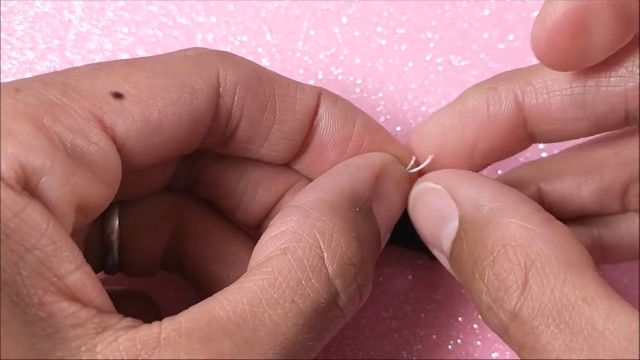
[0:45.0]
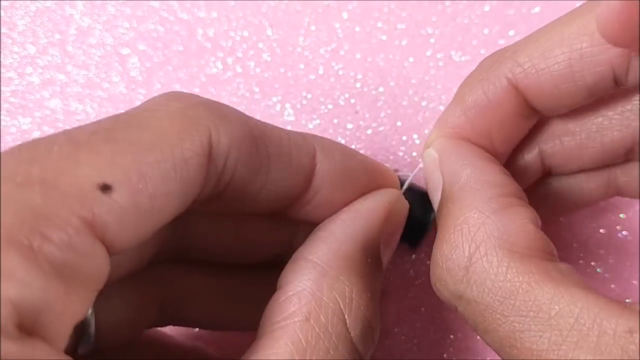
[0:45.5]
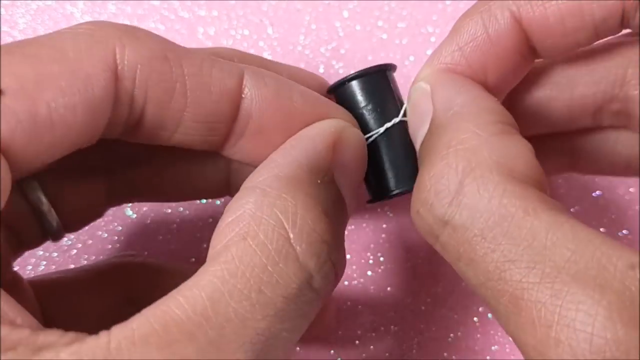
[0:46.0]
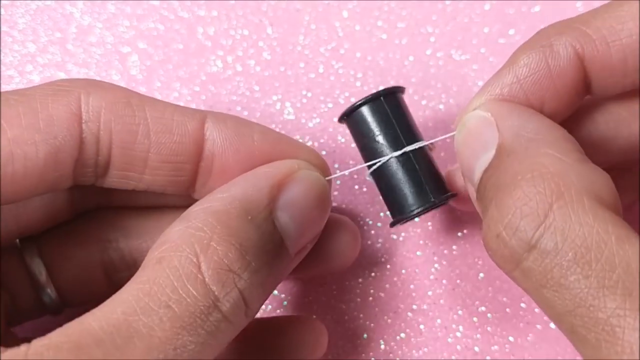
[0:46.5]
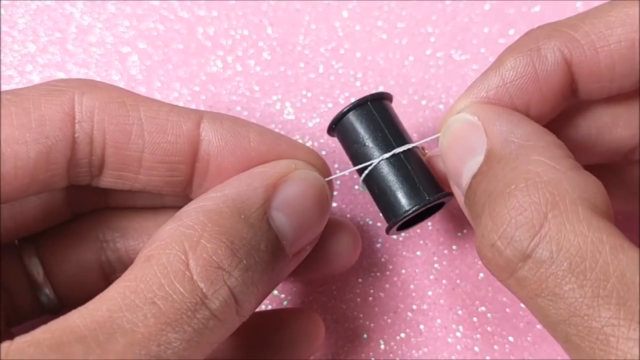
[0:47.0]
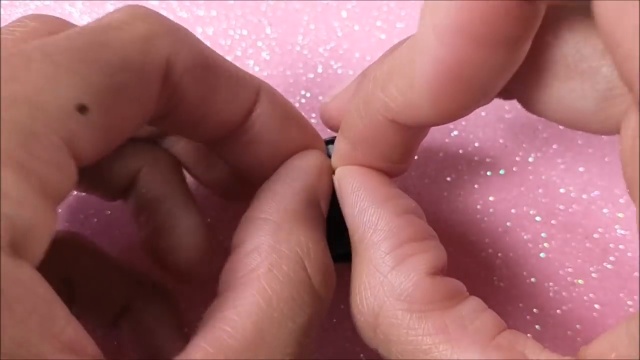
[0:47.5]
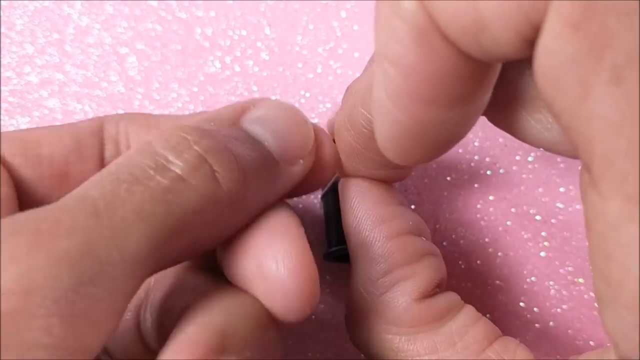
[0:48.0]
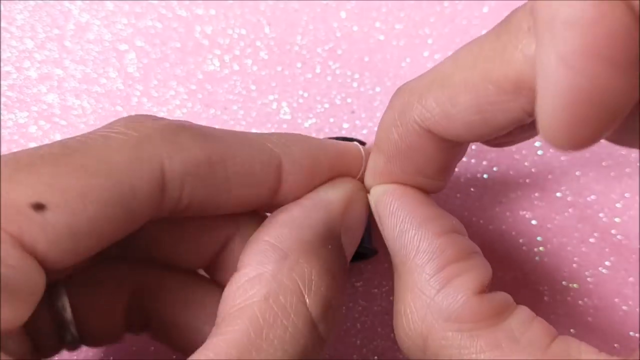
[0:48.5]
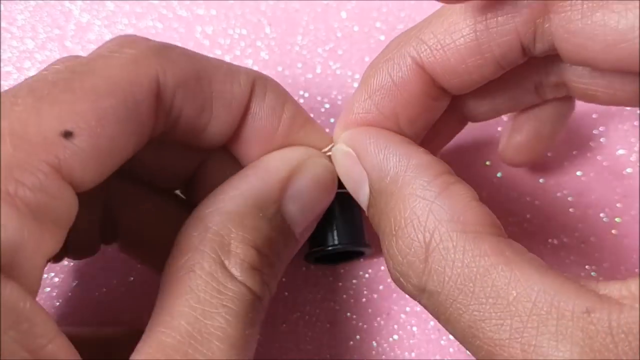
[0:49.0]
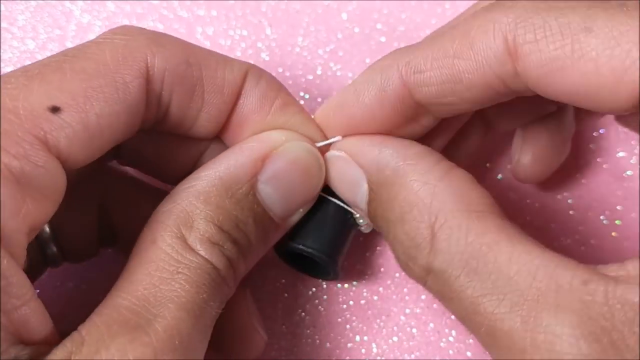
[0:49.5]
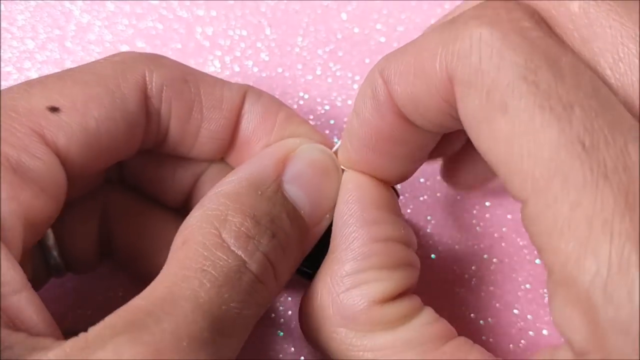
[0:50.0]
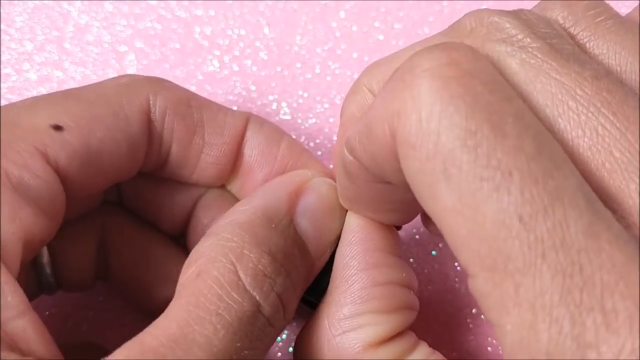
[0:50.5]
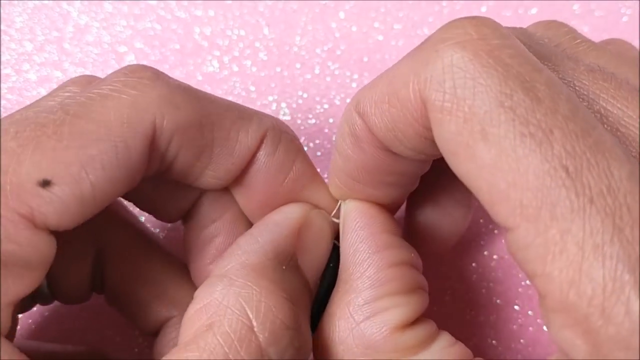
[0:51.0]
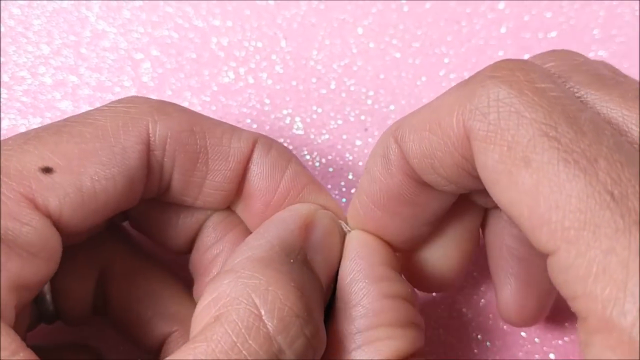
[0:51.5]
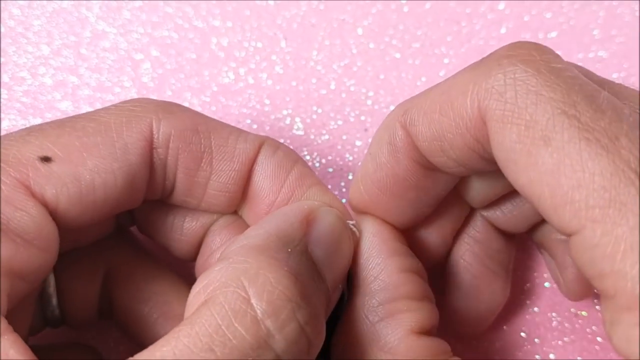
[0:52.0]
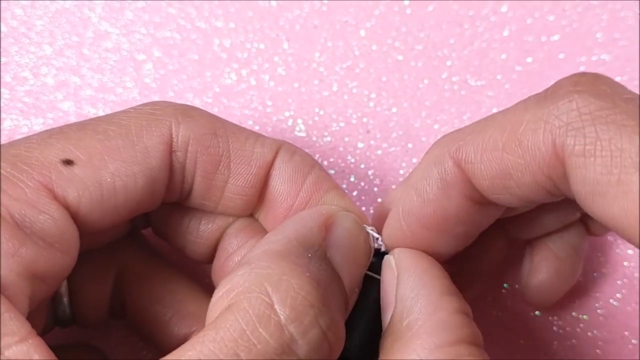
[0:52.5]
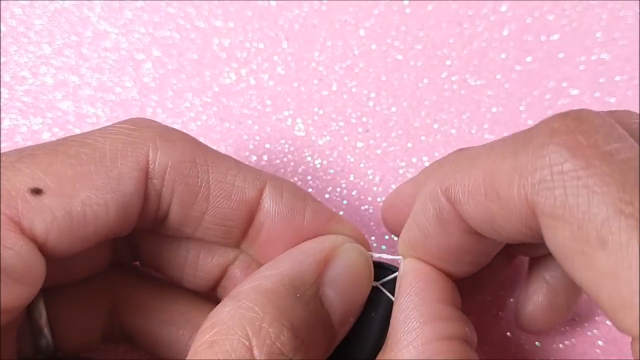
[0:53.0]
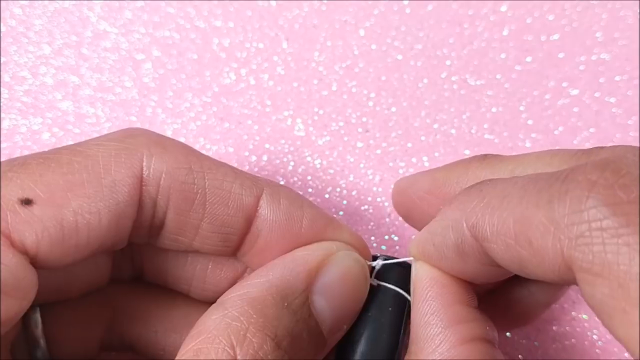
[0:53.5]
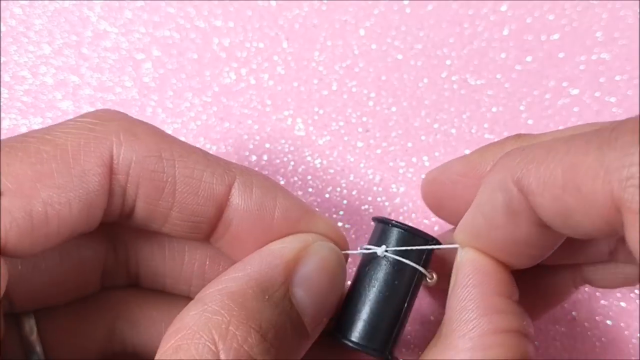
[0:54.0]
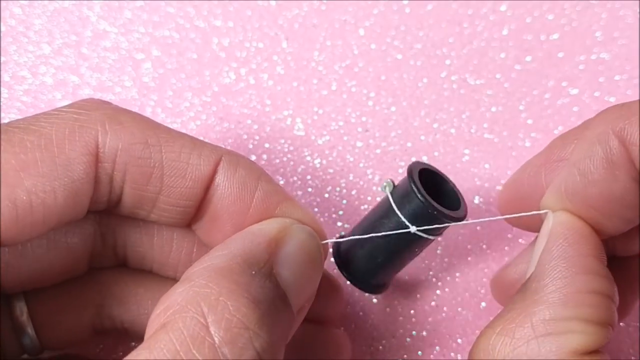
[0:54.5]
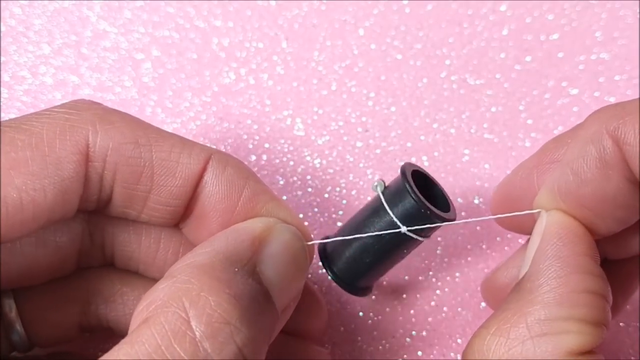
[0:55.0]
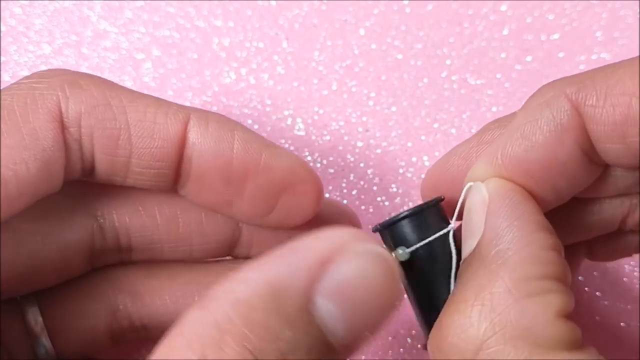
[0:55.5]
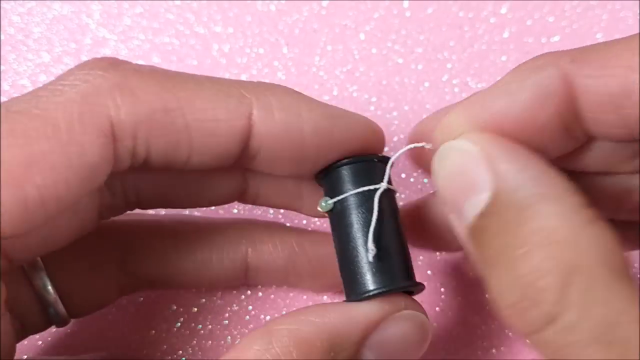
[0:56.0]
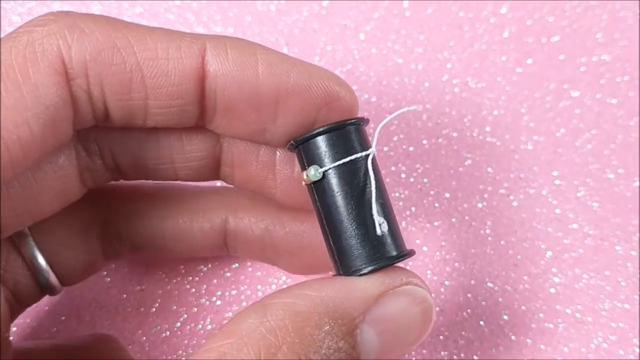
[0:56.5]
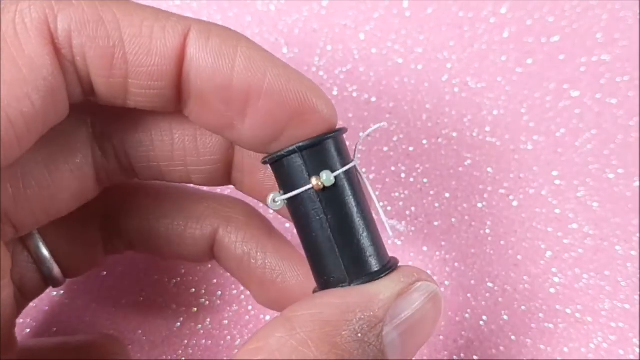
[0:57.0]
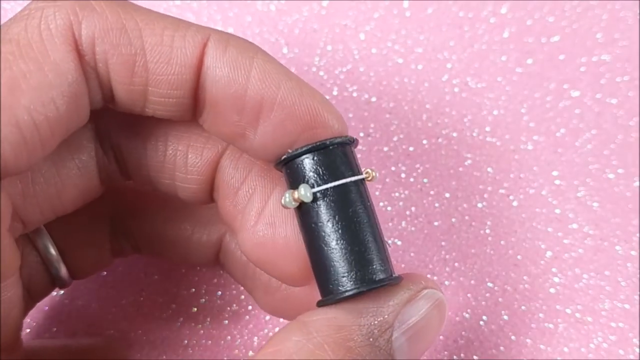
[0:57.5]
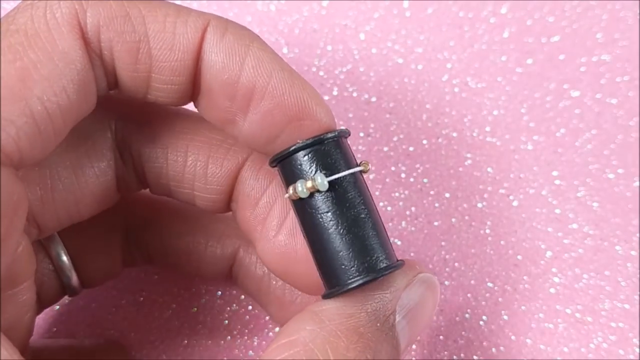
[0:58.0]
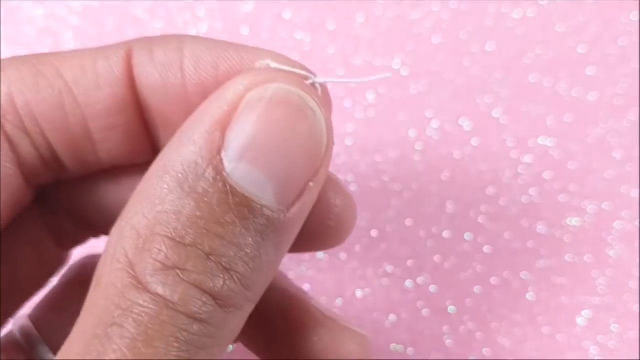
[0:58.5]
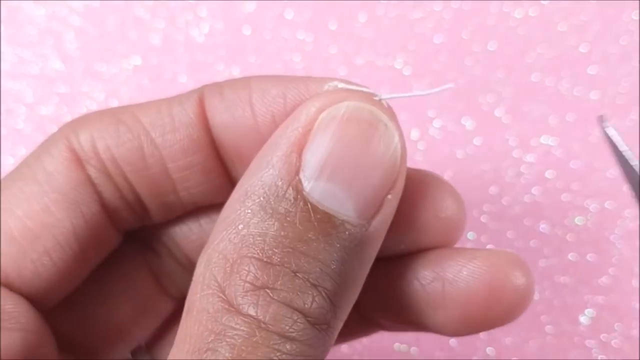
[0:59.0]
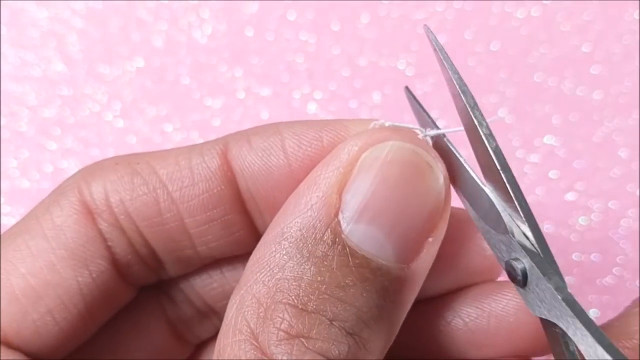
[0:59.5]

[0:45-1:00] The creator finishes the first sandal, with greenish and gold beads alternating on the white string. She places it on a black roller, ties it together and cuts off the excess string. The tiny knots are tied using just the fingers, the thumb and index fingers and also the middle fingers. The first sandal is done.